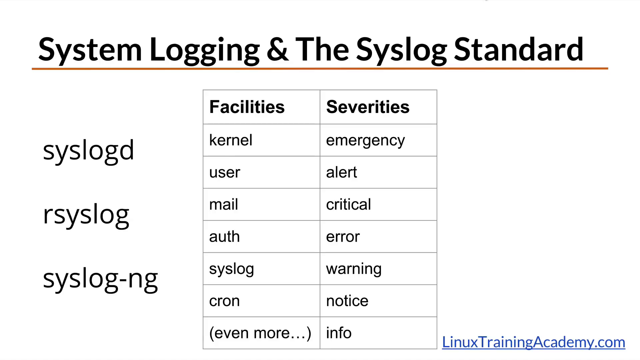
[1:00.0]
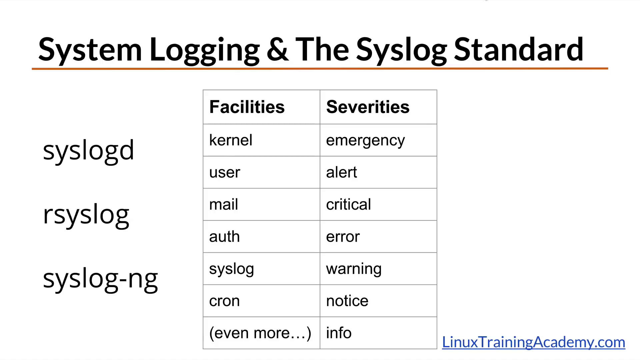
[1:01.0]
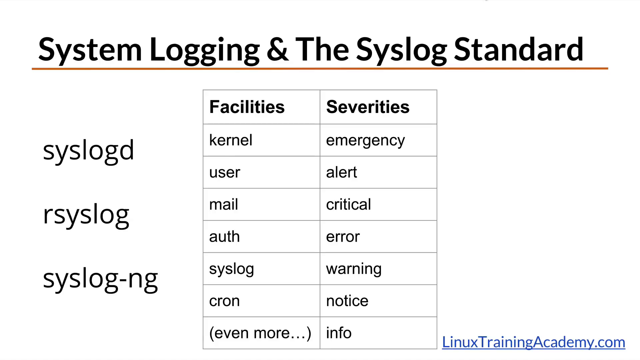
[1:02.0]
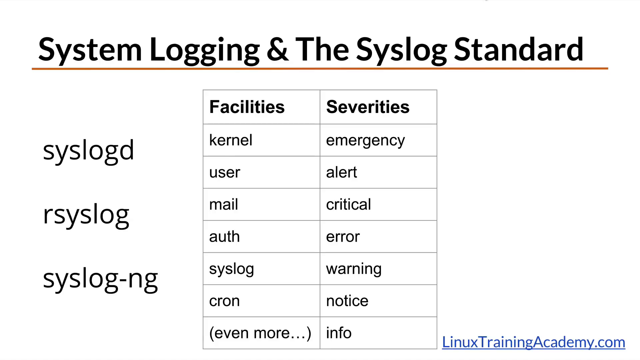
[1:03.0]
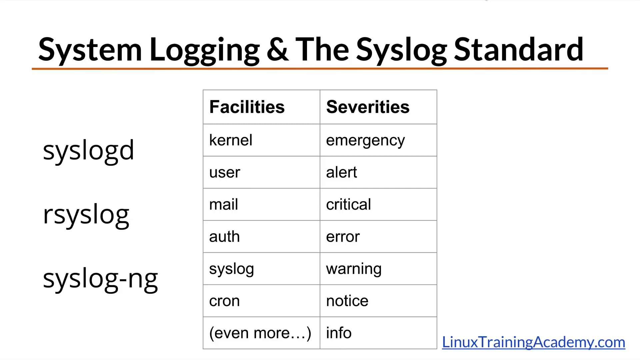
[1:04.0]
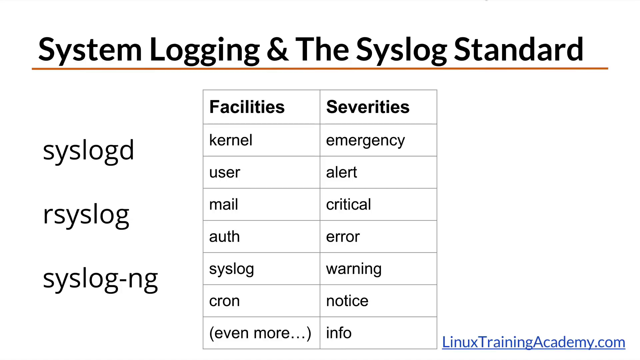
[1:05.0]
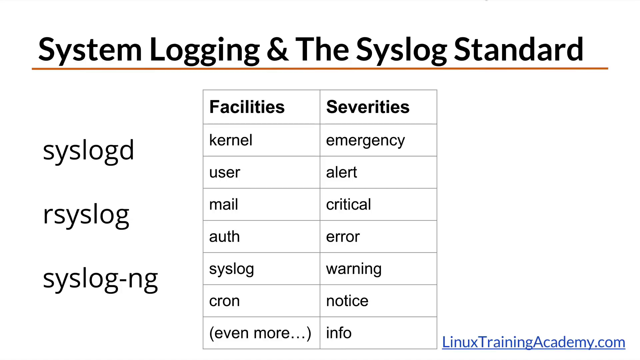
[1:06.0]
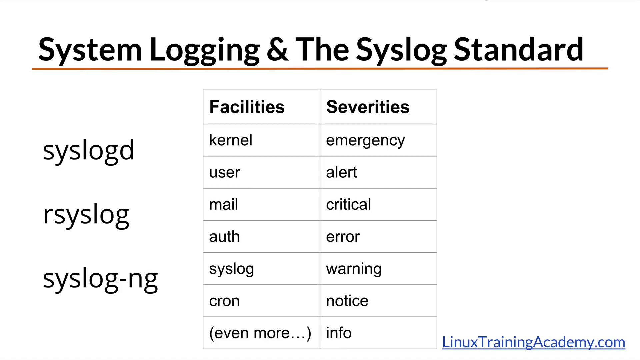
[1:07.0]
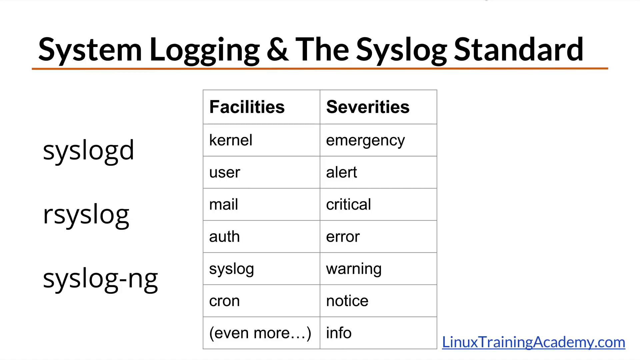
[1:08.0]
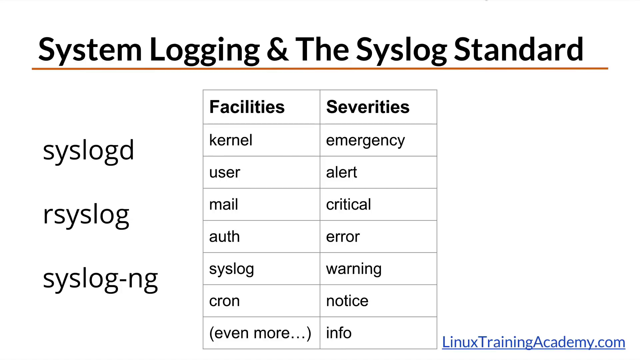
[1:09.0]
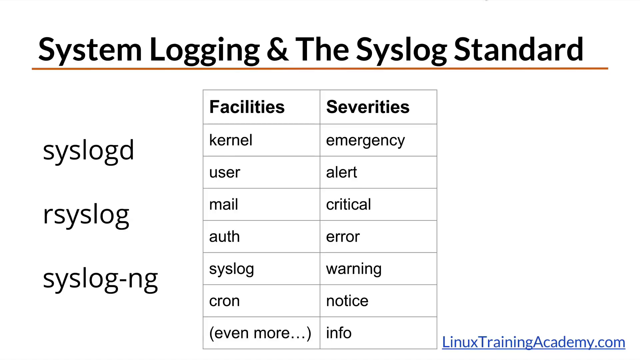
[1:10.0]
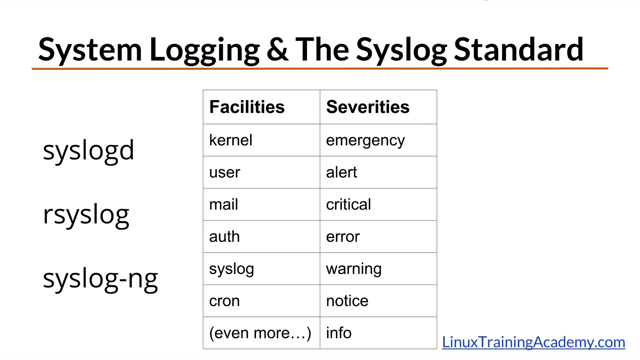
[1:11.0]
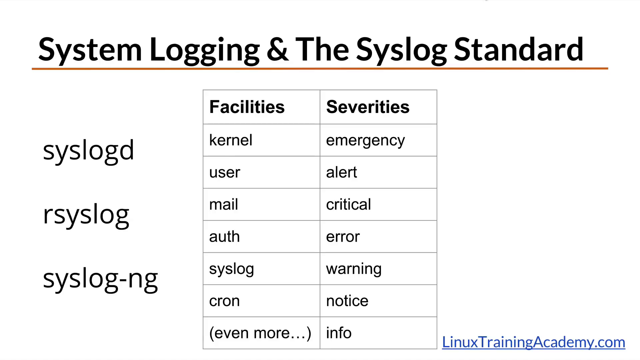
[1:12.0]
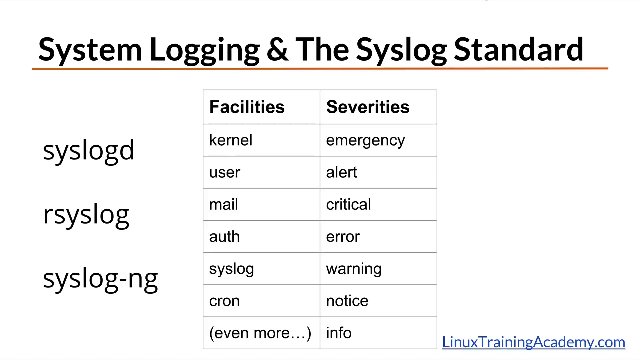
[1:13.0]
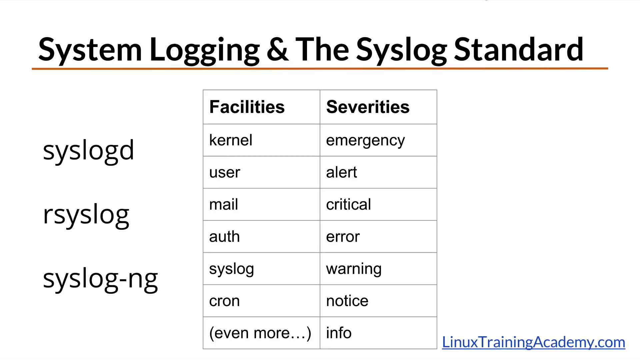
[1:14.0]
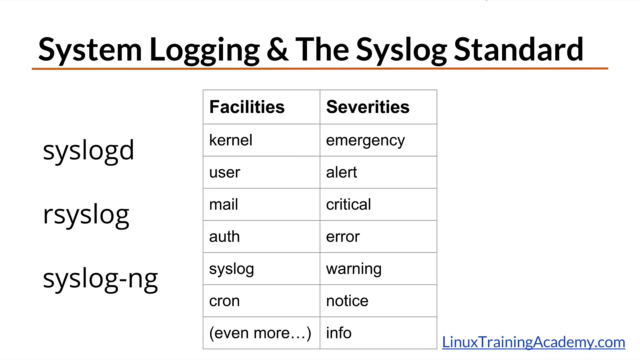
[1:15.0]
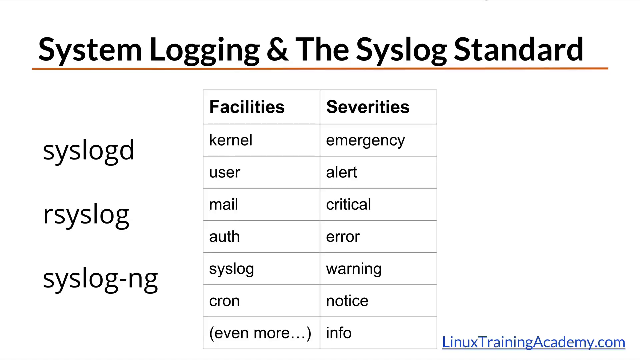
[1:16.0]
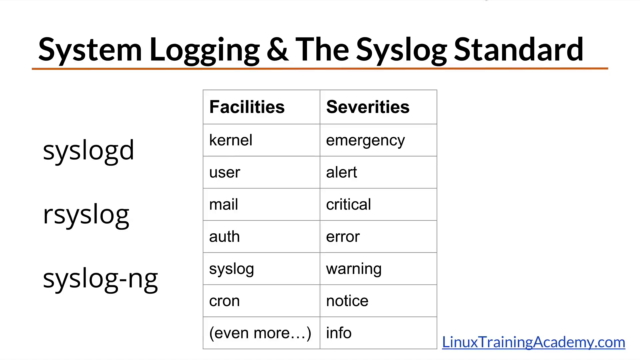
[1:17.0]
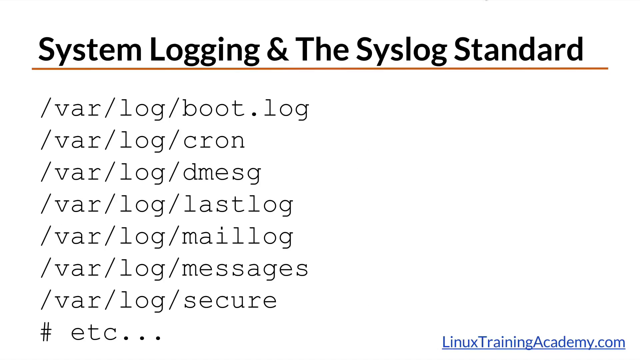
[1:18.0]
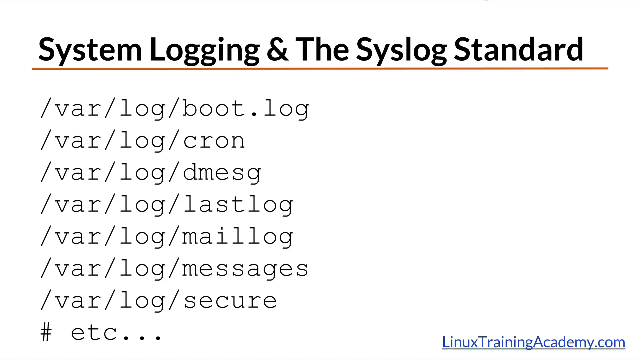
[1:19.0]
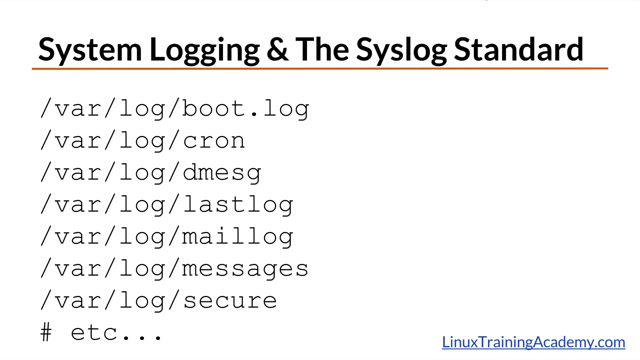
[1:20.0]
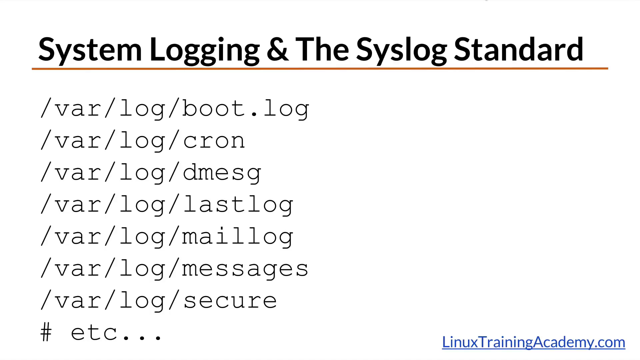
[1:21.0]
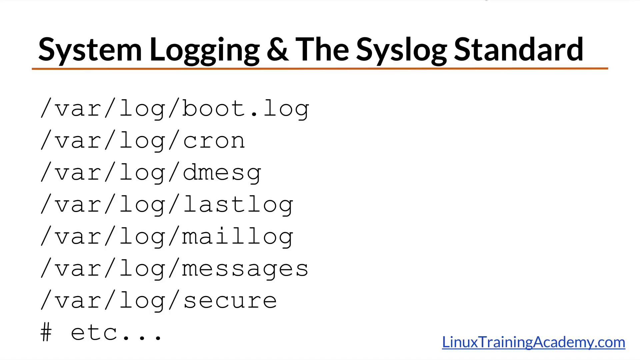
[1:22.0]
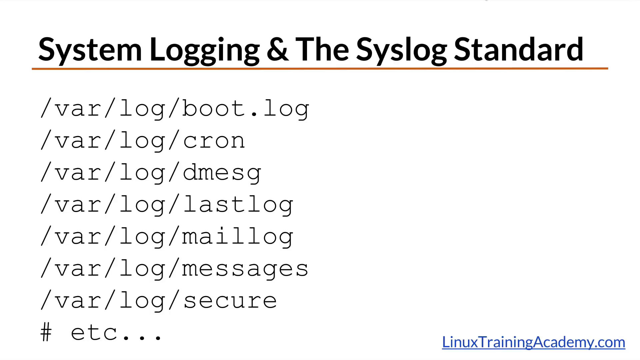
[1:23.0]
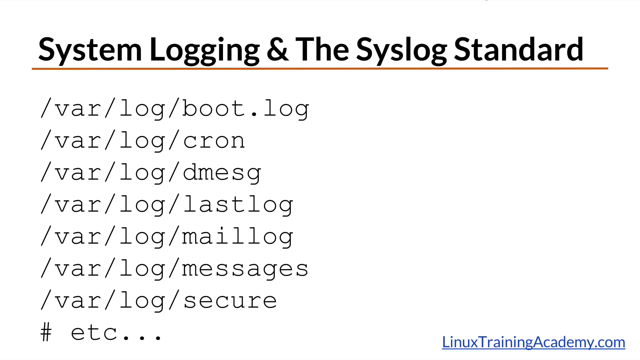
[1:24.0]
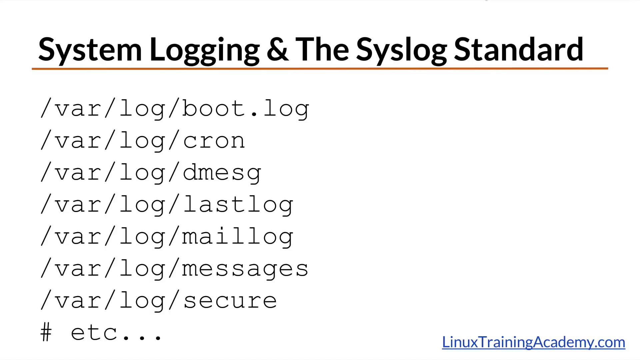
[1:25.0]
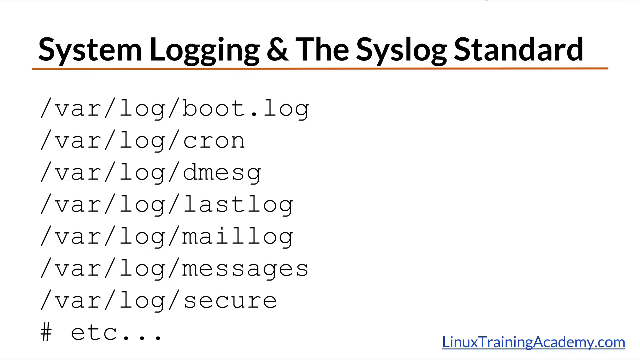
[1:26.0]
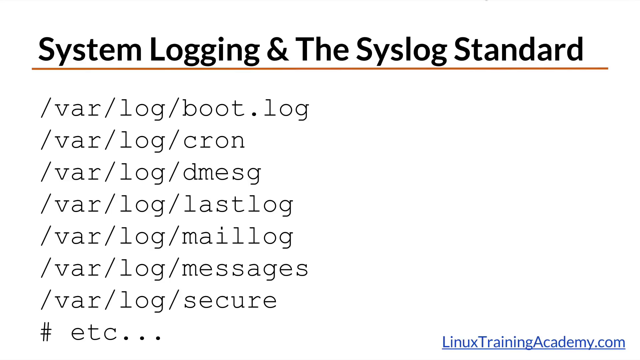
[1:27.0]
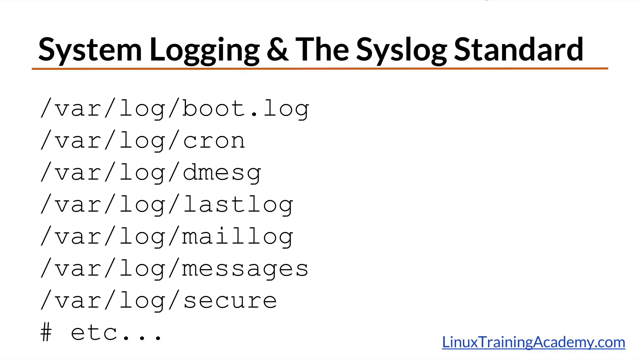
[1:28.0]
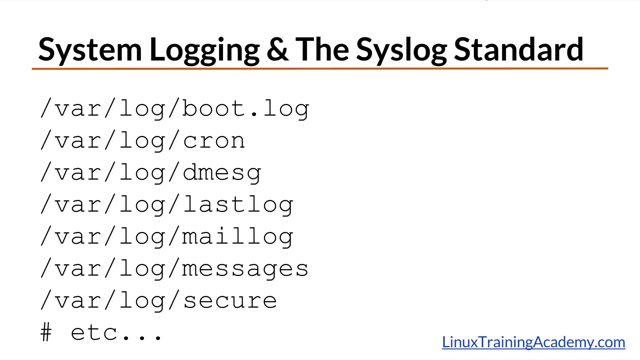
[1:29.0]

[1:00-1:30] Two columns of words are shown, and the words appear to be related to each other. Logos are also shown, including syslog and rslog. After that, various codes appear on the screen, starting with the letter V.